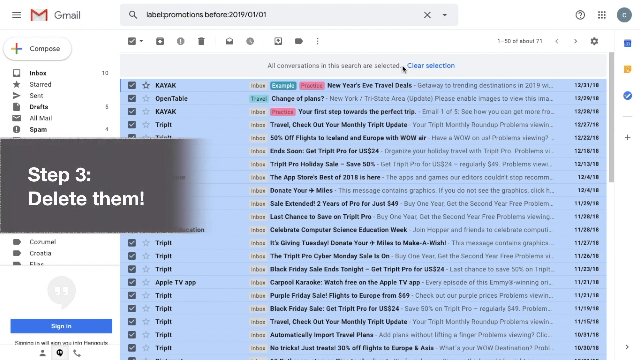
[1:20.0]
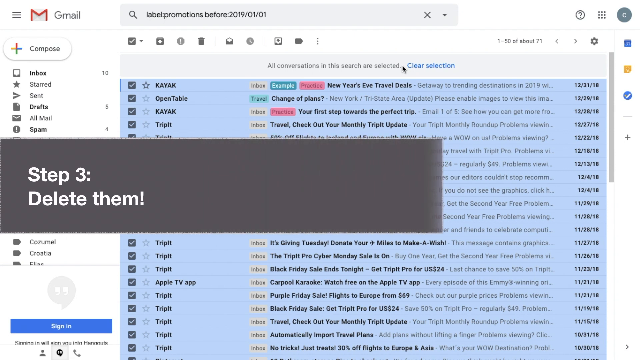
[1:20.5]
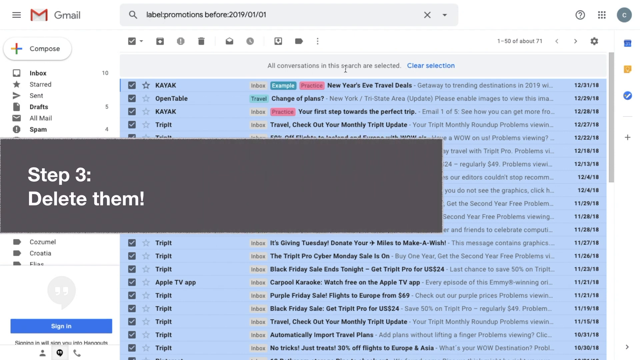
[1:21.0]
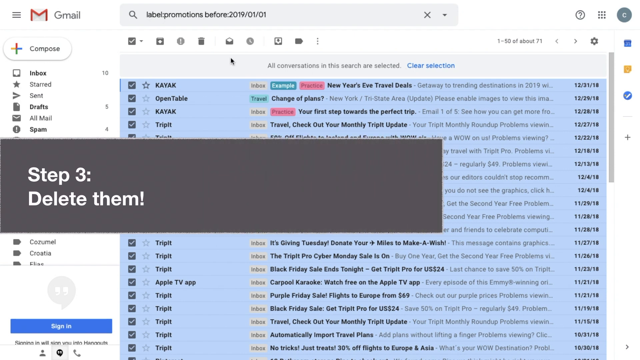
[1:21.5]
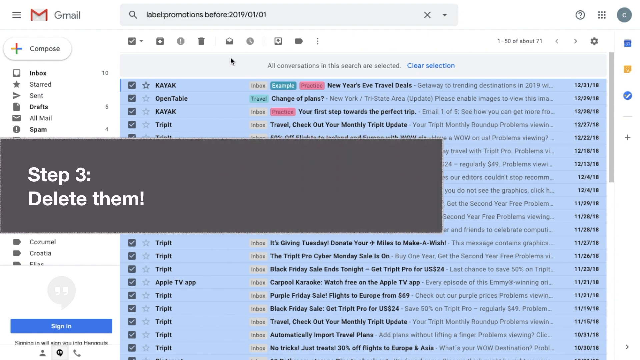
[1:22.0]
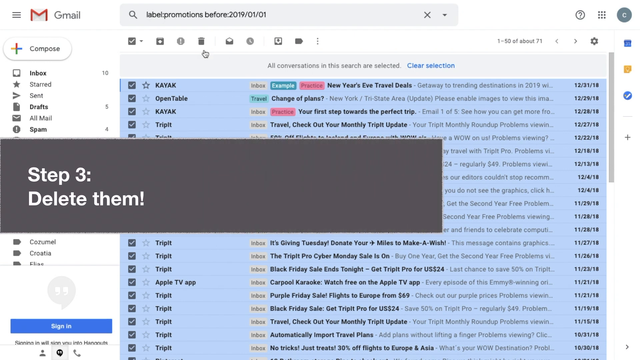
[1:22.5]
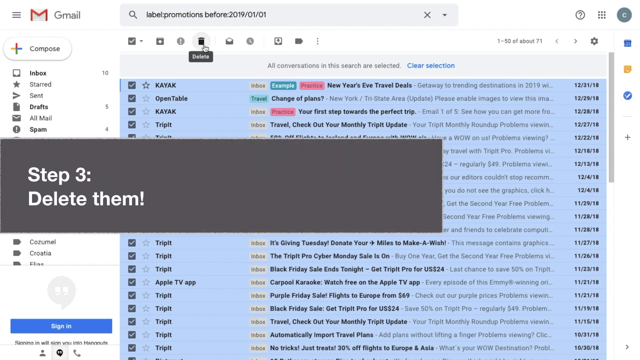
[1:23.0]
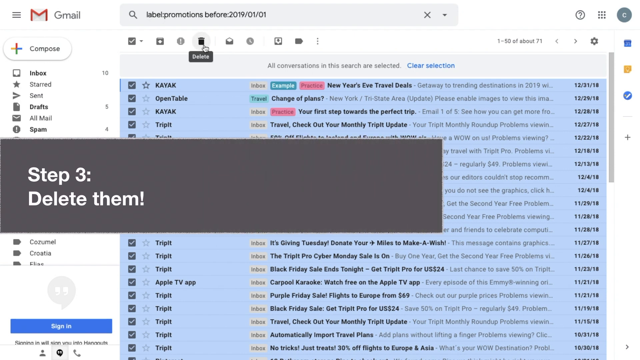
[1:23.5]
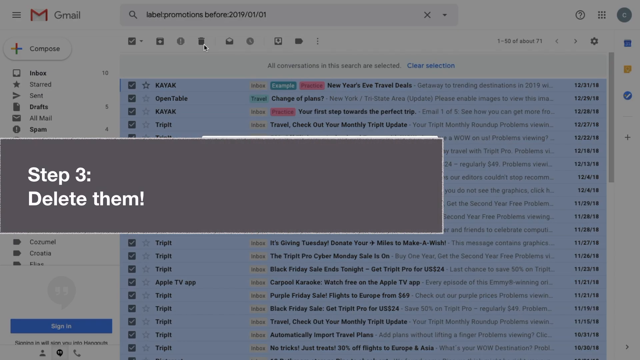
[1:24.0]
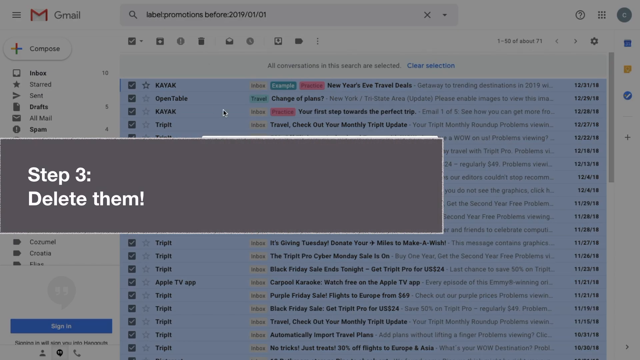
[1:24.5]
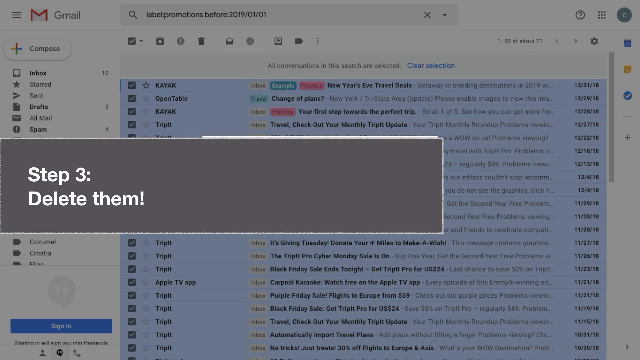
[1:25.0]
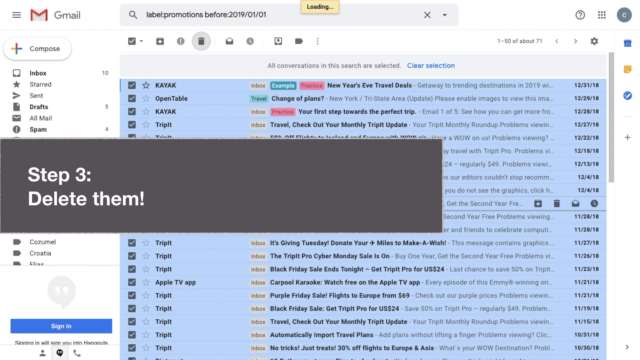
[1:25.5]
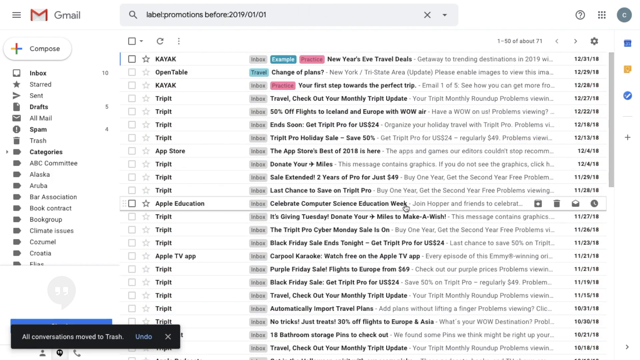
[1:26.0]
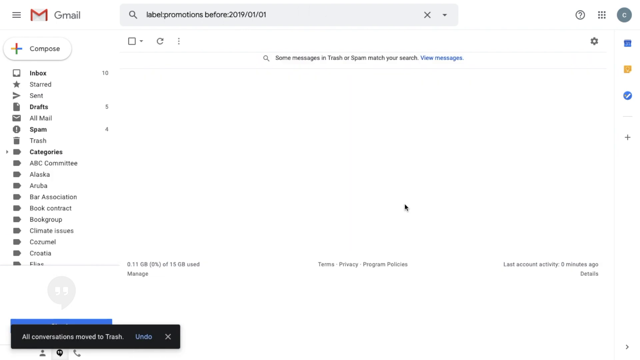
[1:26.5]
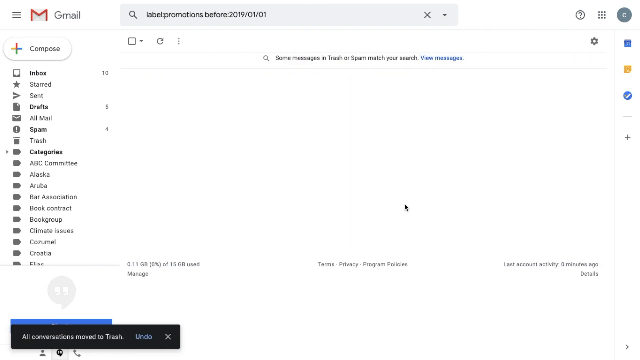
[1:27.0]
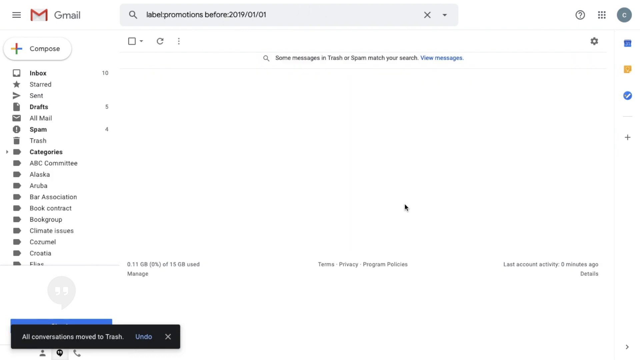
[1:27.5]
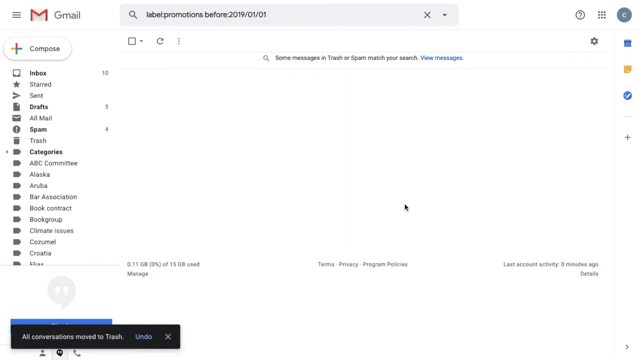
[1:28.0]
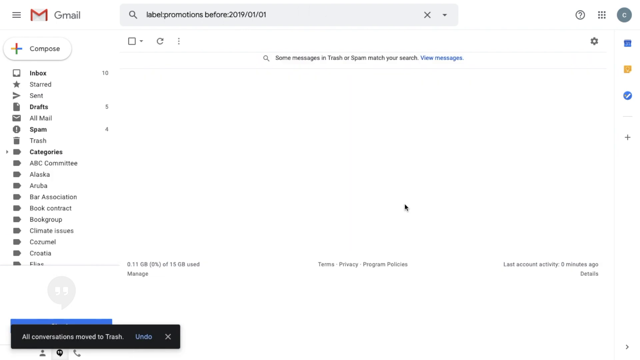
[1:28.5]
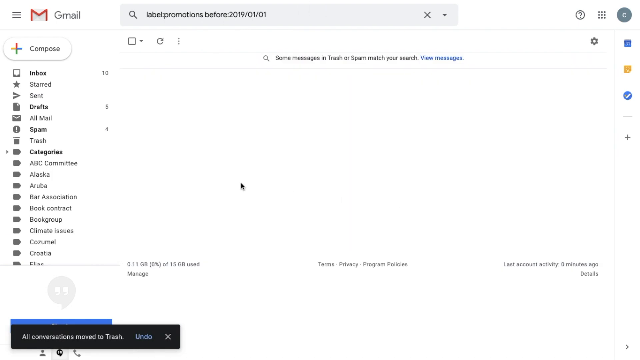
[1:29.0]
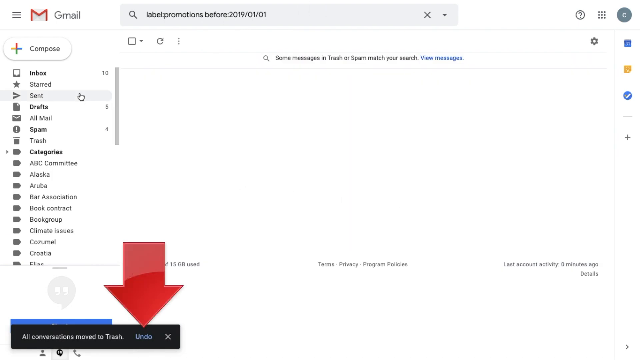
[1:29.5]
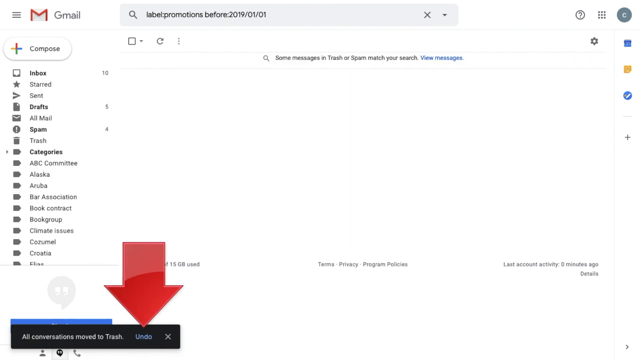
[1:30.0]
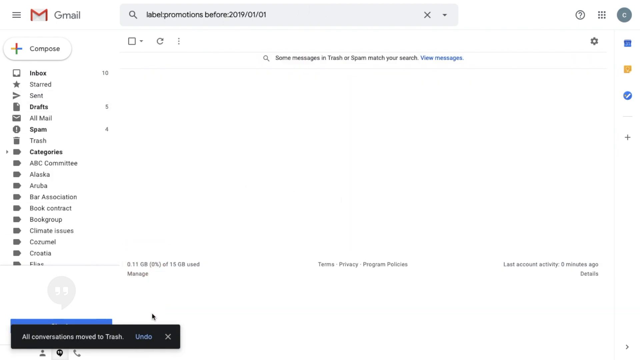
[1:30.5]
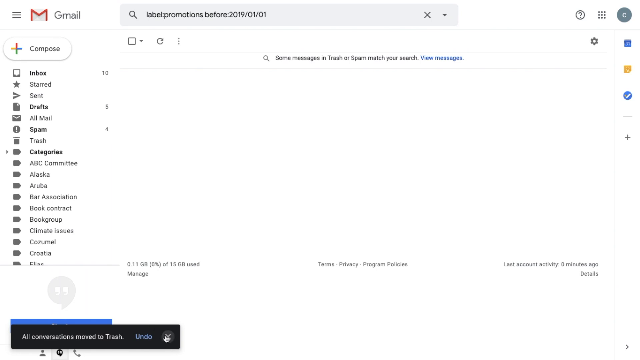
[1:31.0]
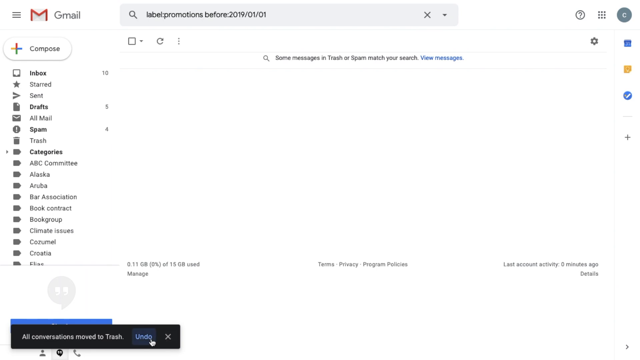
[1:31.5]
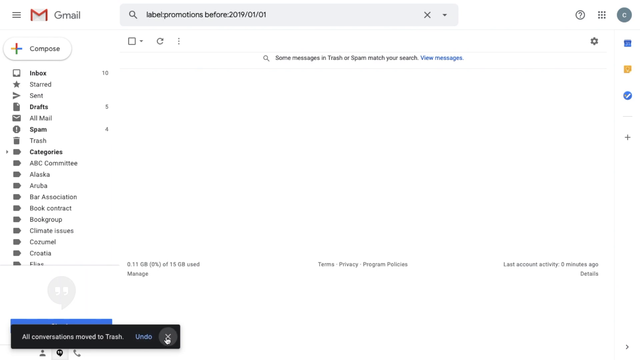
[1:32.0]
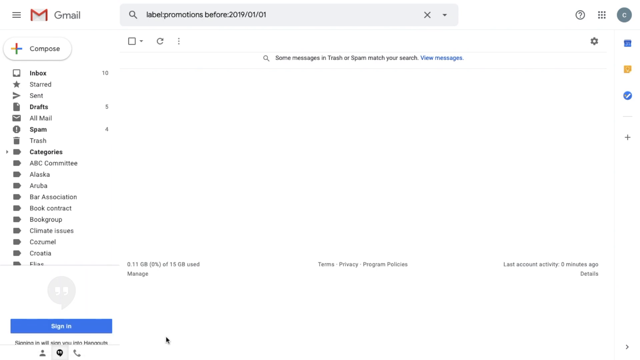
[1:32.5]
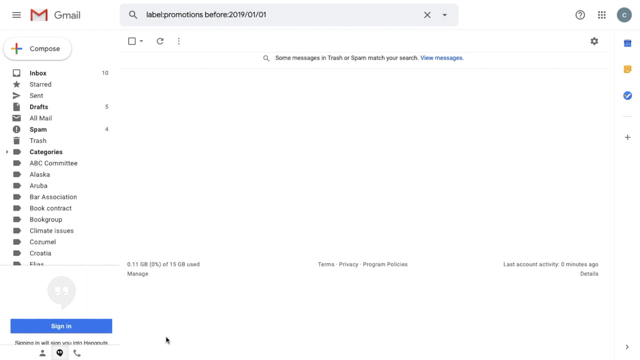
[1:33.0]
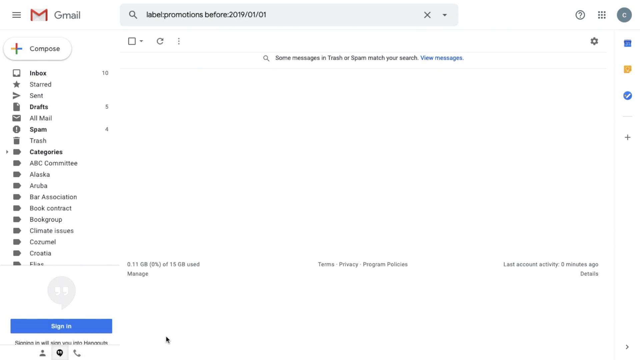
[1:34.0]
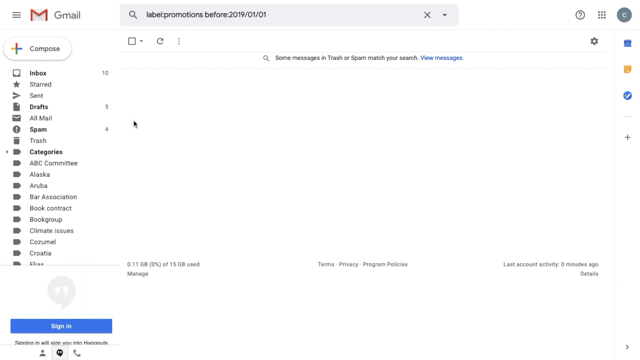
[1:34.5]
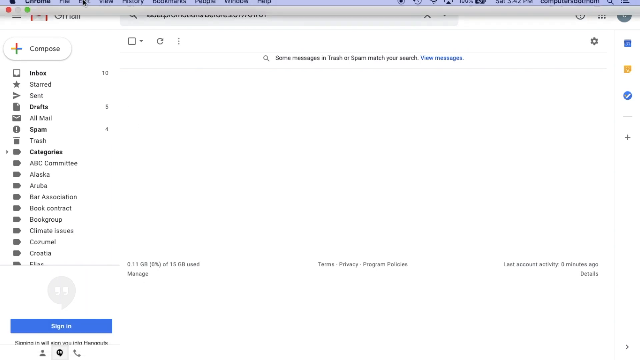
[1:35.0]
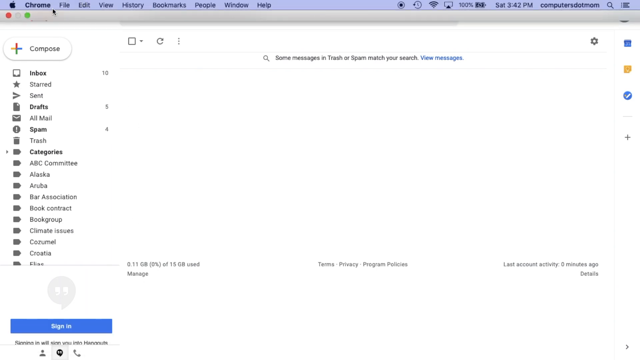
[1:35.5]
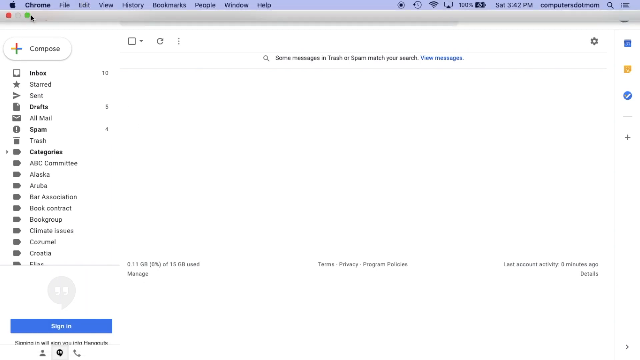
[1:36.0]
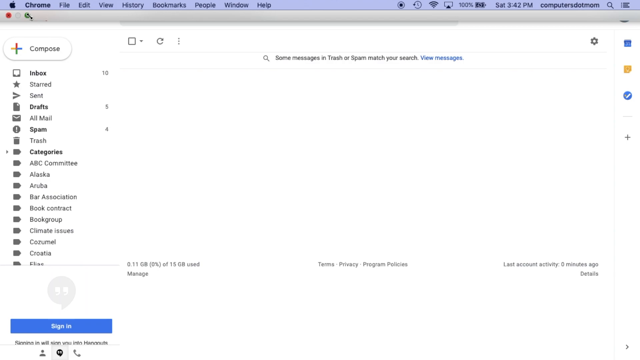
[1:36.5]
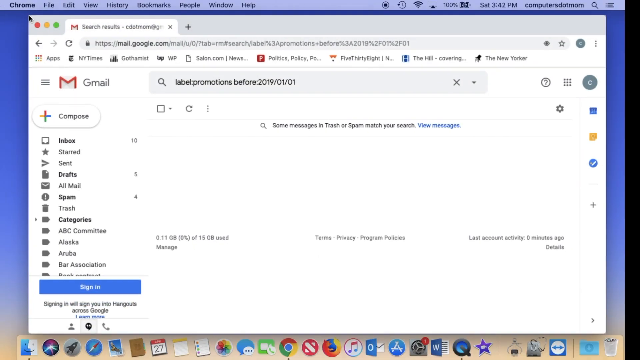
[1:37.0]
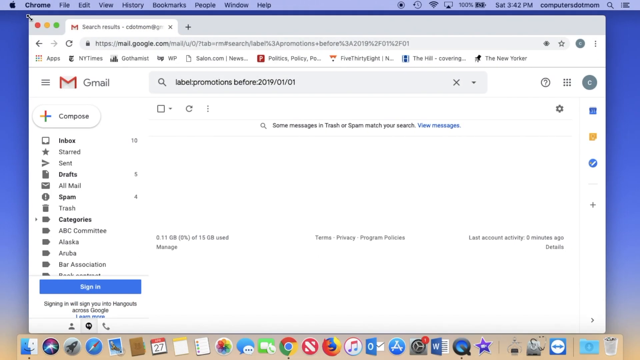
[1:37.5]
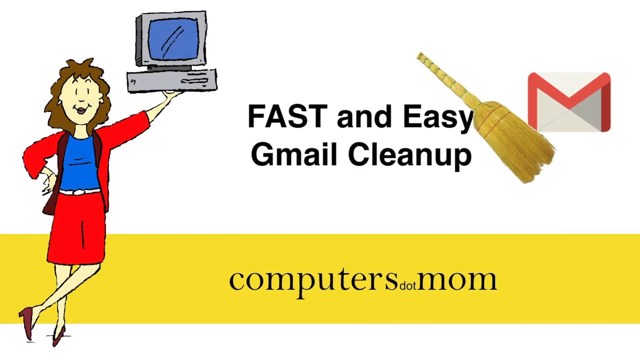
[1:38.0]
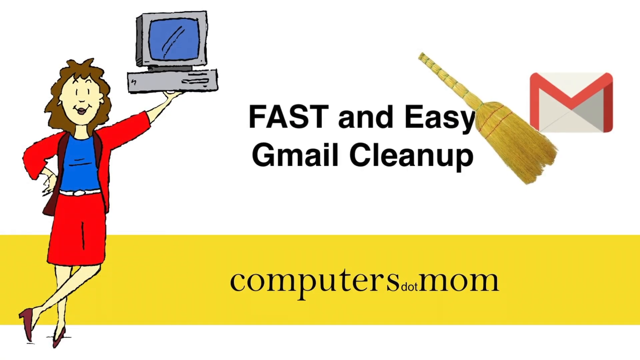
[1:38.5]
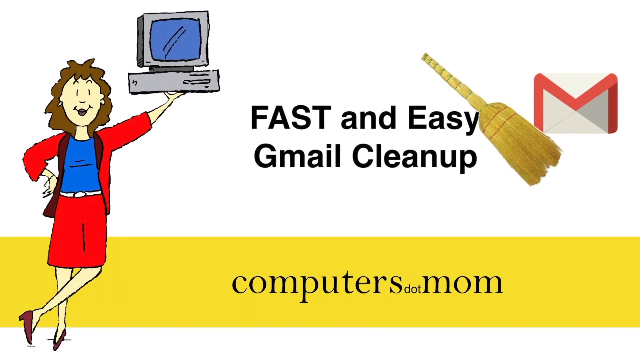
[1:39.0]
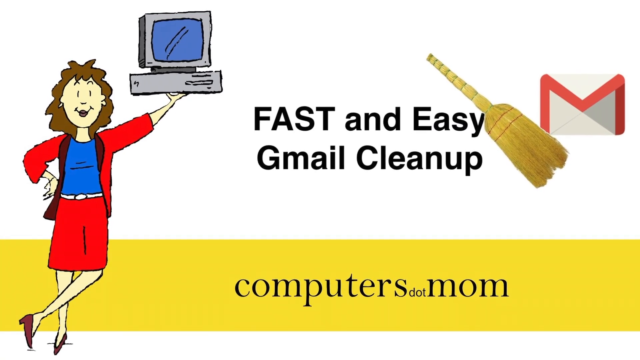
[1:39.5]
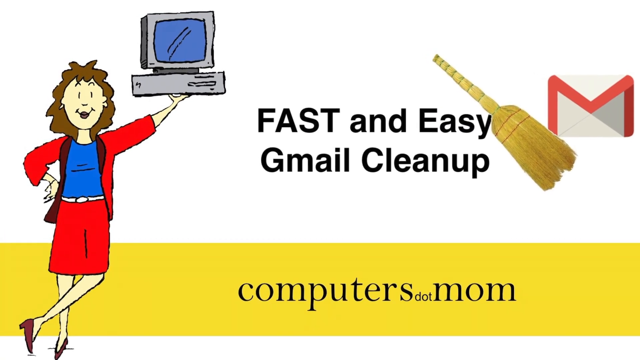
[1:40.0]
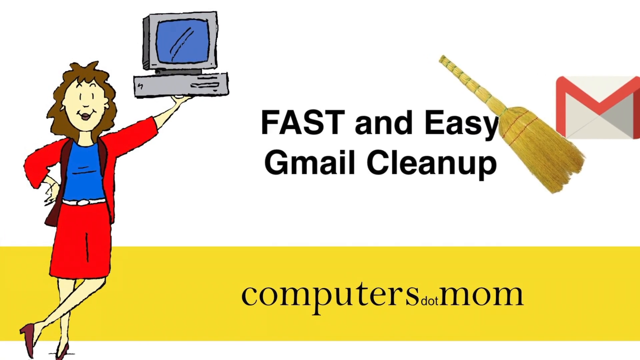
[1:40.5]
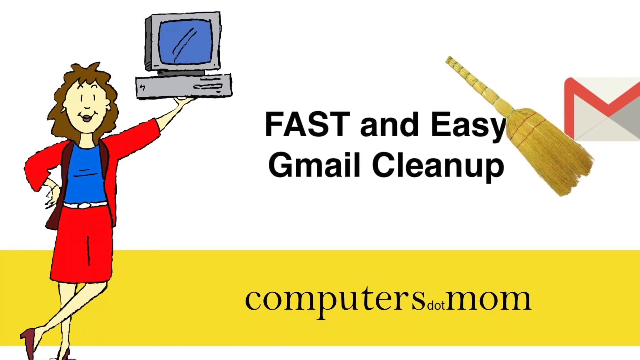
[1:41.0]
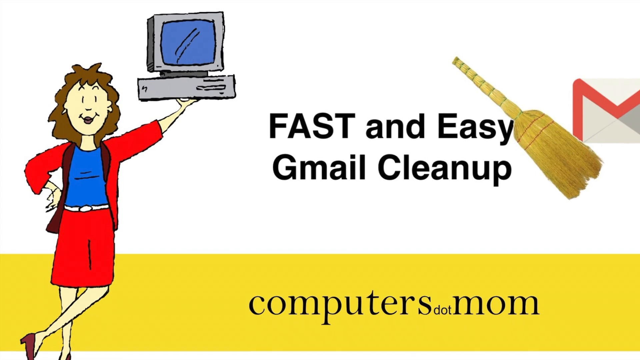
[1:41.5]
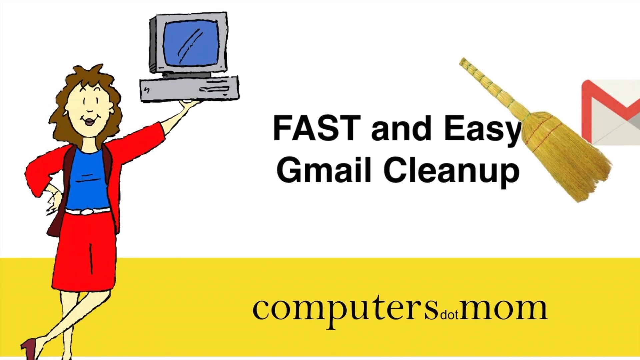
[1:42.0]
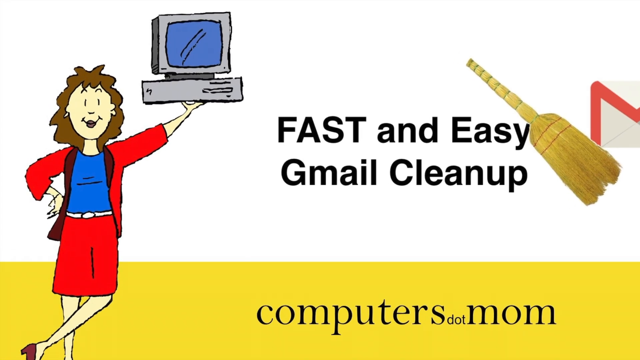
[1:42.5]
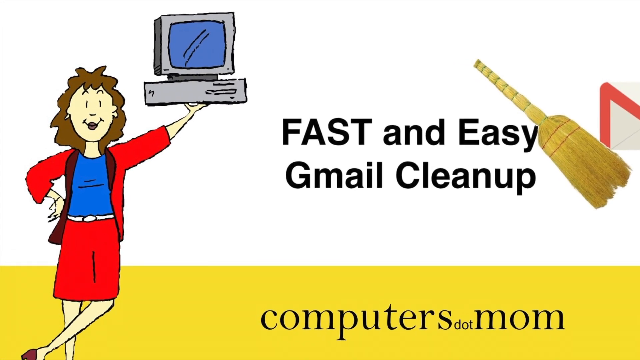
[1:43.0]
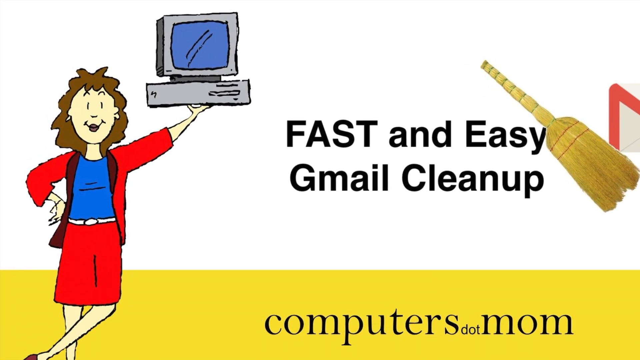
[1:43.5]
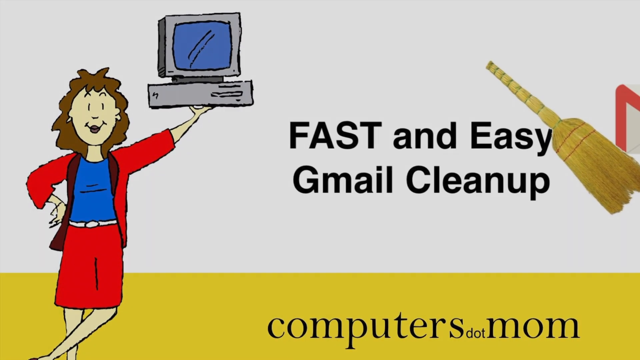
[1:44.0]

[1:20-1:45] The final step is to delete the selected emails. The trash can delete icon is clicked and all the messages disappear. A pop-up reads "all conversation moved to Trash" with an Undo option and a Close button, and there is also a message saying "some messages in Trash or Spam match your search view messages". The cursor arrow appears near the Undo and Close buttons, the pop-up is closed, and the page is minimized.